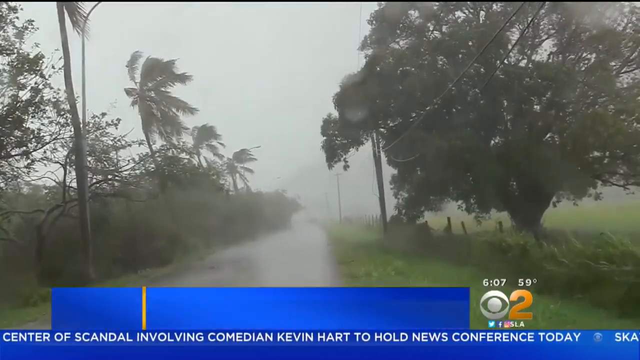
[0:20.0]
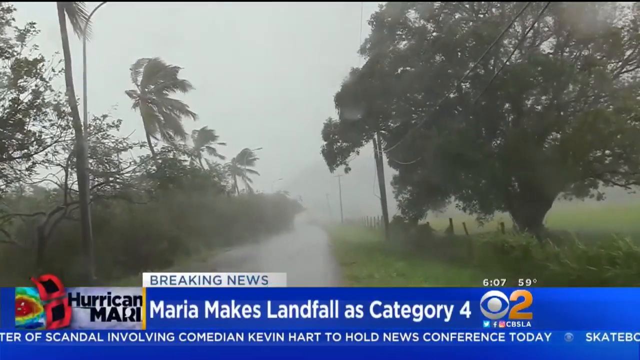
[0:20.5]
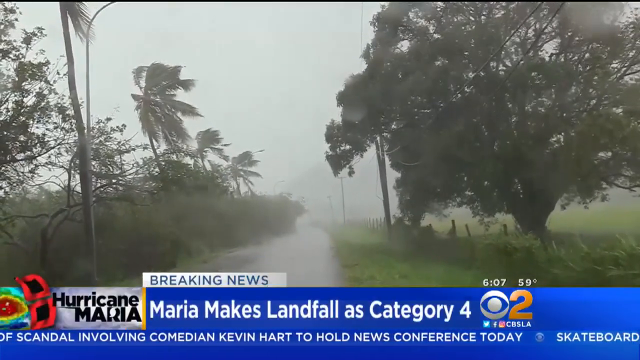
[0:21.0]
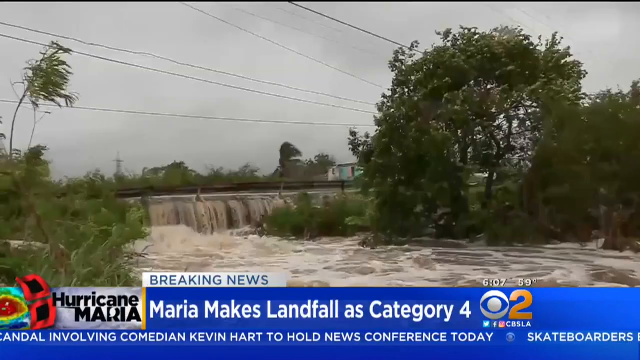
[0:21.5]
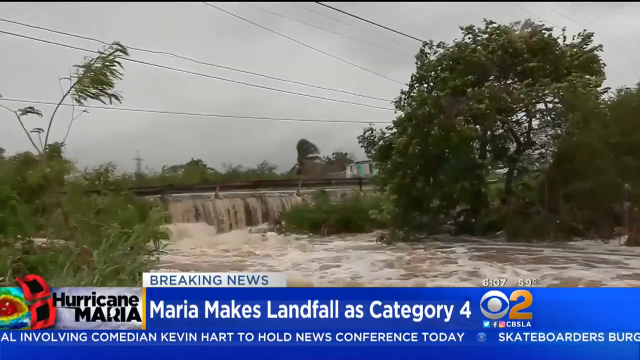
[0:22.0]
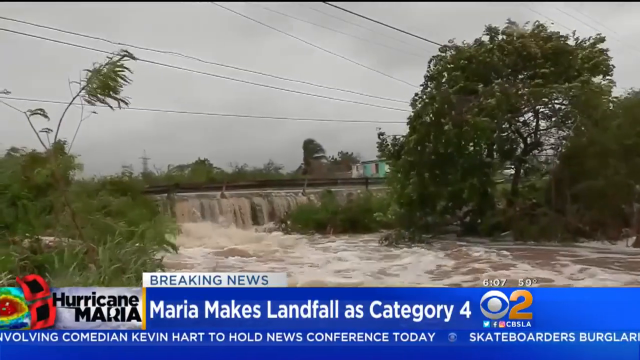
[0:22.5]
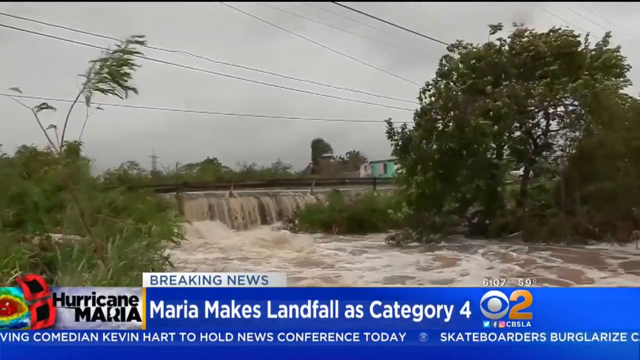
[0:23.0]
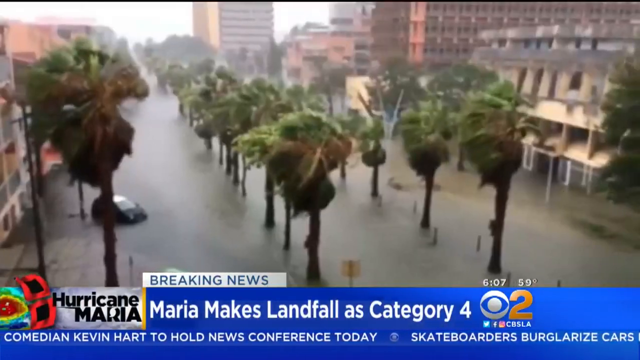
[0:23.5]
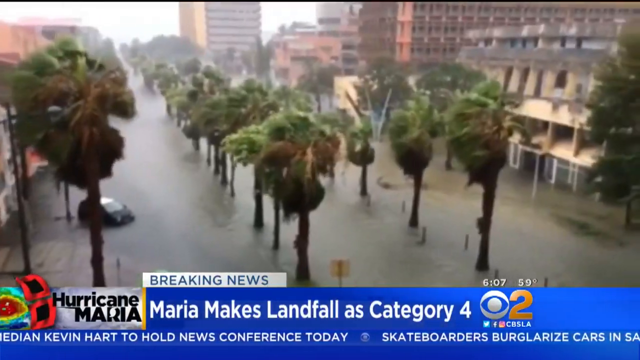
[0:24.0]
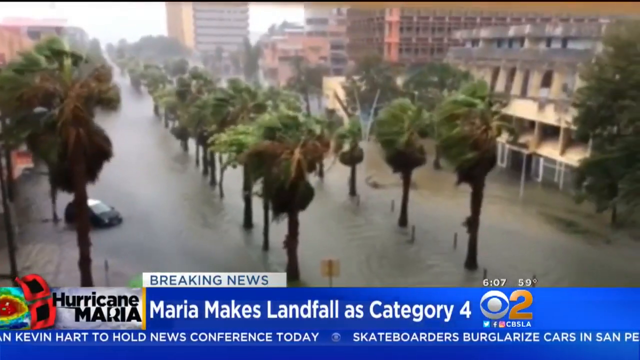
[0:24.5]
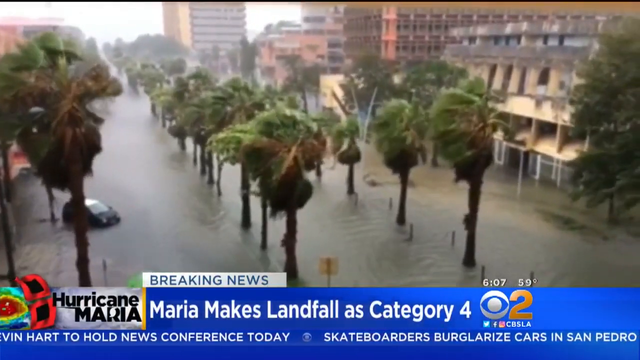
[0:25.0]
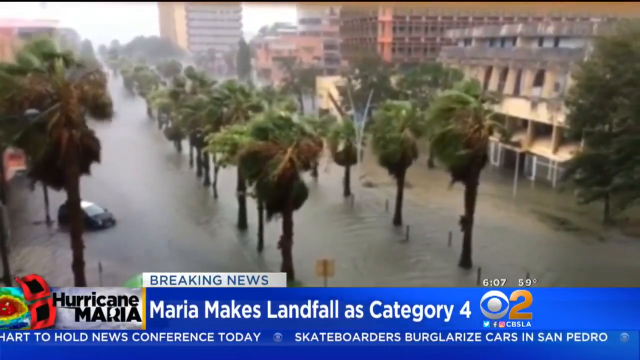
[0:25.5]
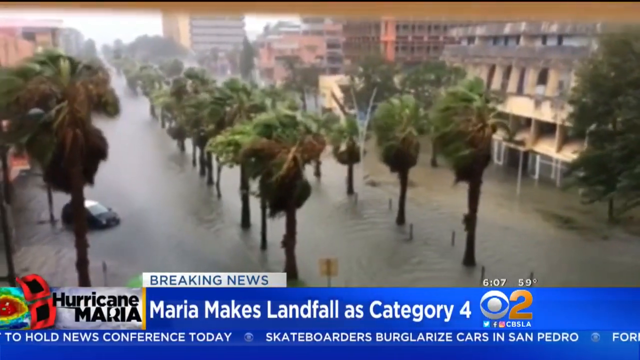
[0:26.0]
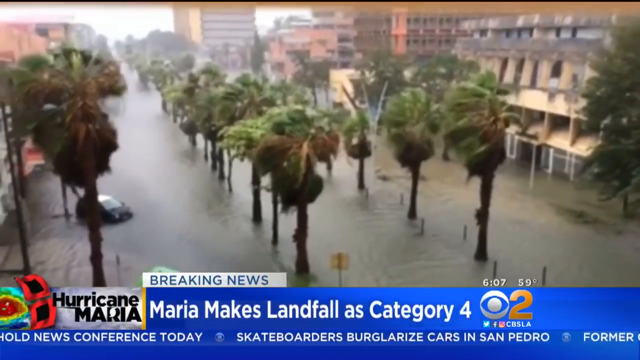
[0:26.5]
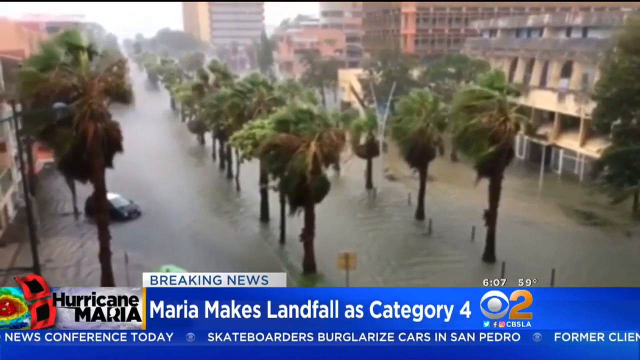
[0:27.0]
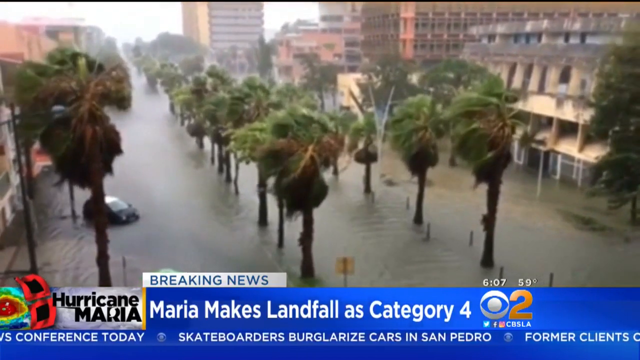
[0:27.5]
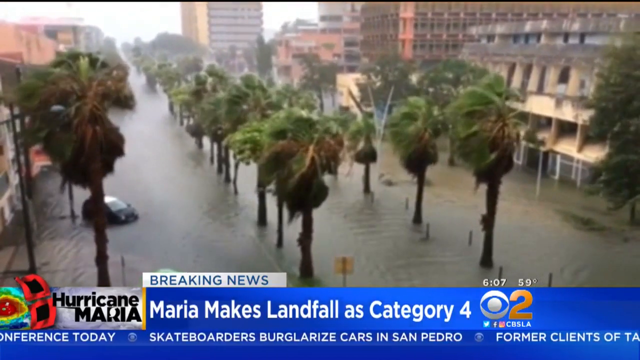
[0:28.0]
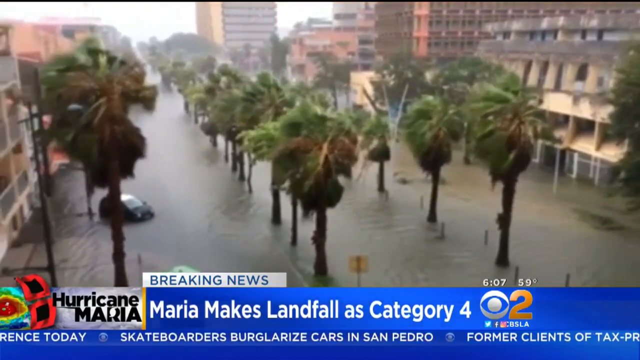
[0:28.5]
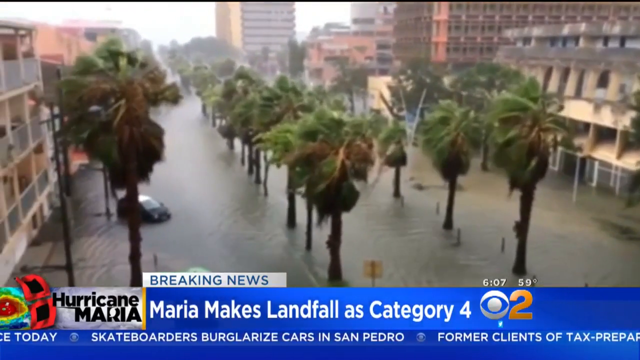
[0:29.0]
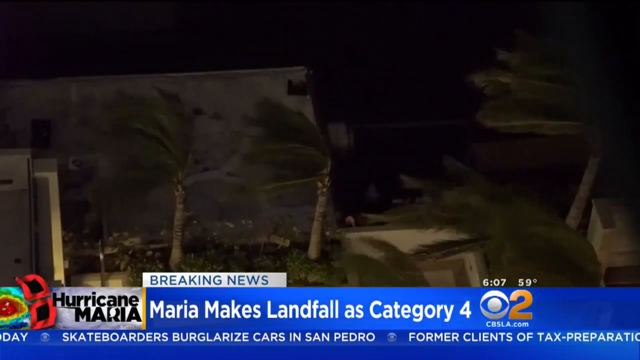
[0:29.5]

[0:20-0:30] Heavy rain falls and pools of water collect. The city is flooding with a lot of water, everything seems to be floating in it, and the ocean's water is rising. The wind is very strong, the trees seem to be broken, and the situation appears to be a dangerous emergency.